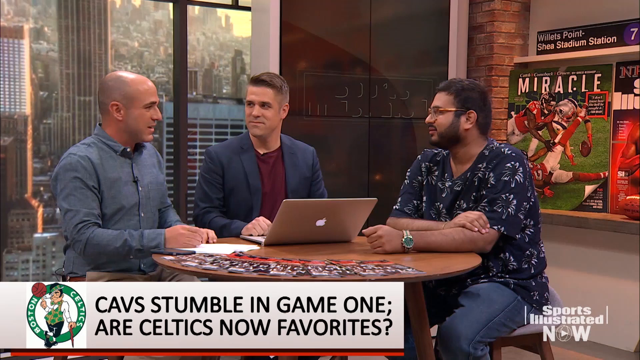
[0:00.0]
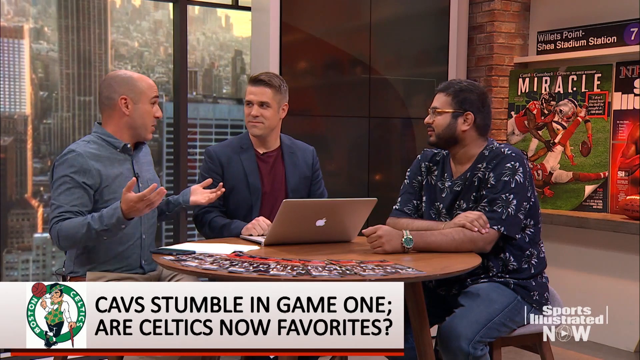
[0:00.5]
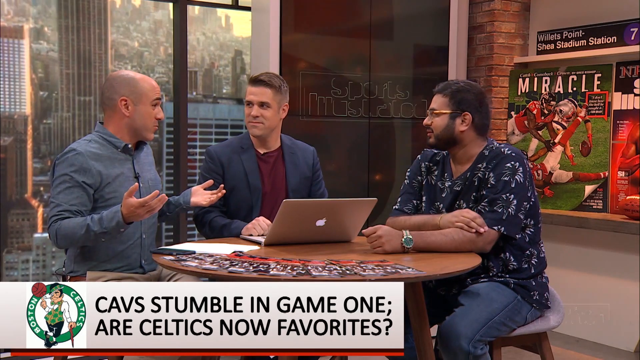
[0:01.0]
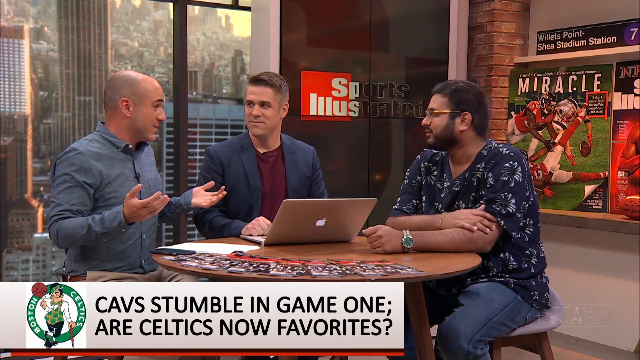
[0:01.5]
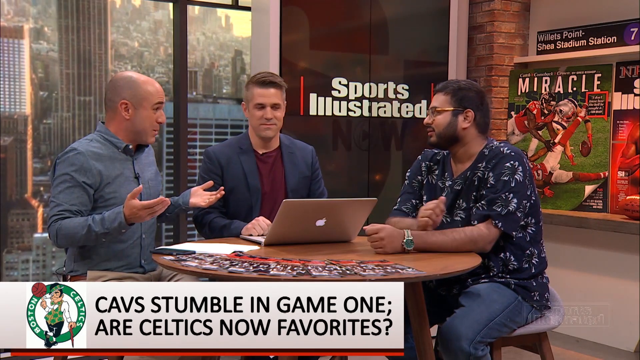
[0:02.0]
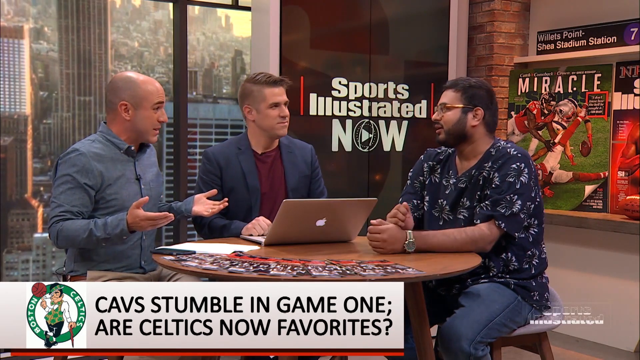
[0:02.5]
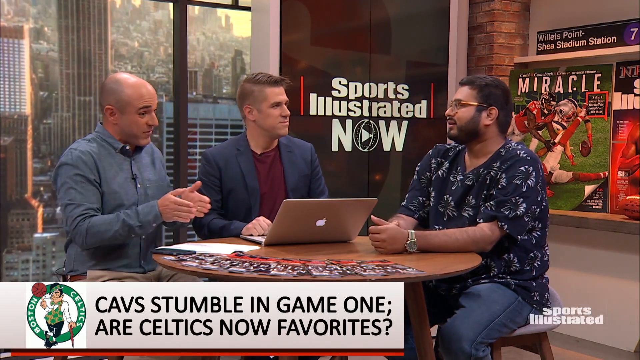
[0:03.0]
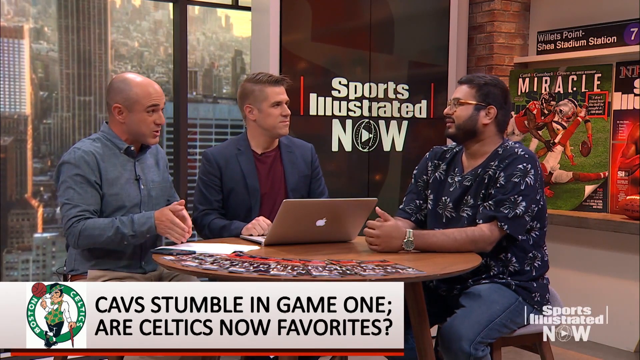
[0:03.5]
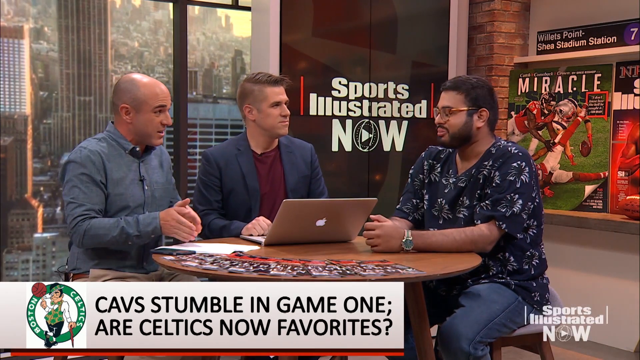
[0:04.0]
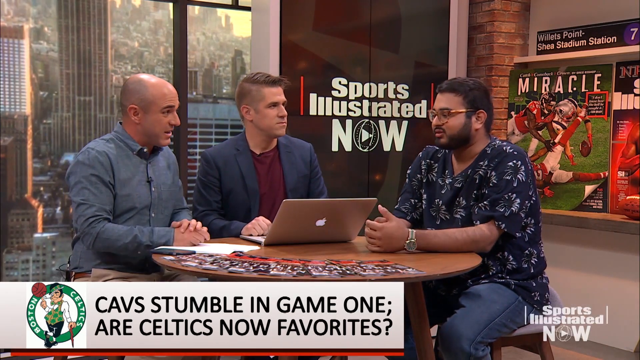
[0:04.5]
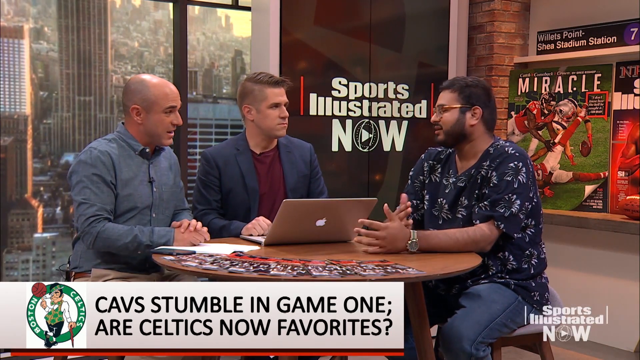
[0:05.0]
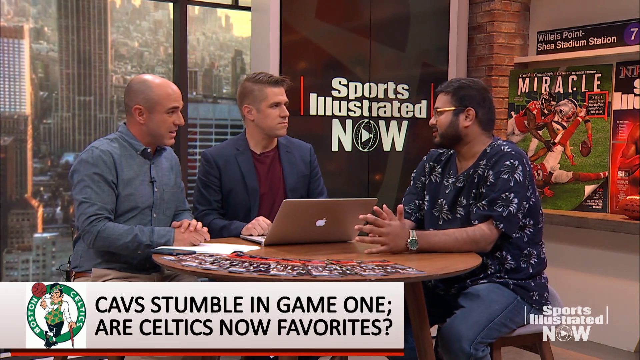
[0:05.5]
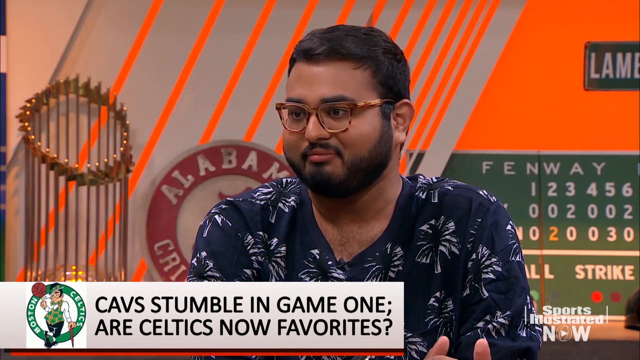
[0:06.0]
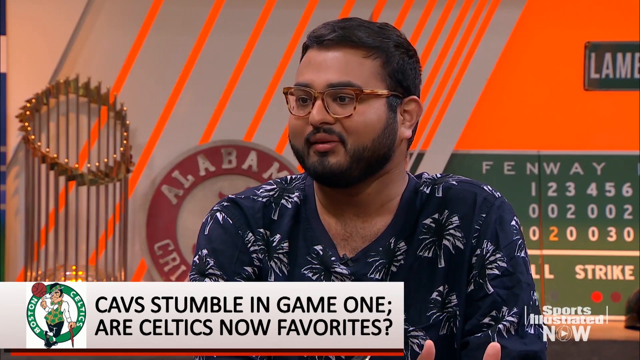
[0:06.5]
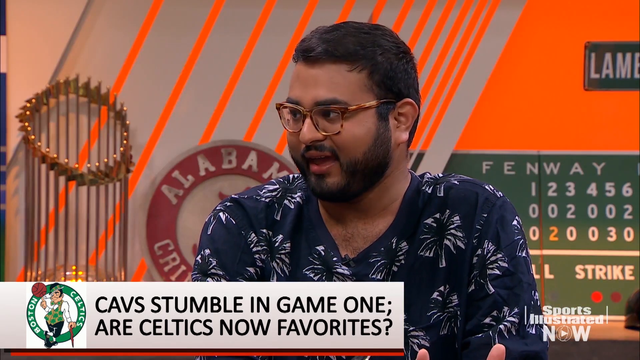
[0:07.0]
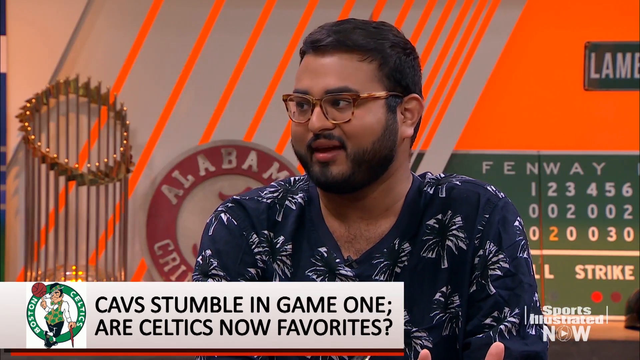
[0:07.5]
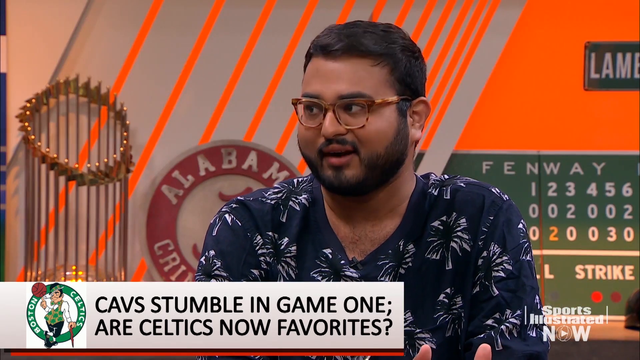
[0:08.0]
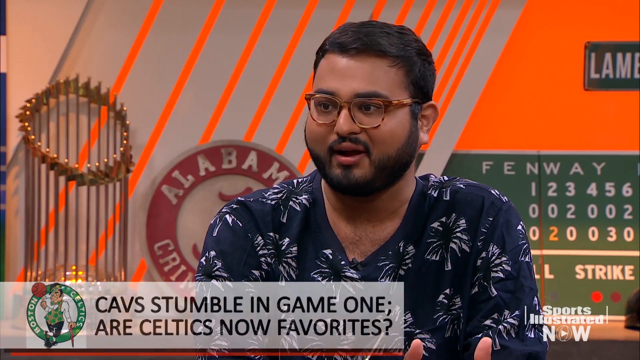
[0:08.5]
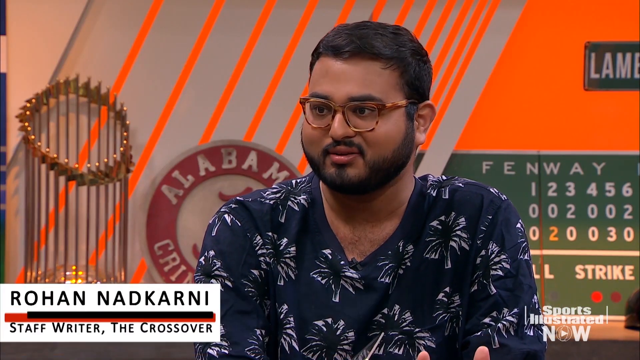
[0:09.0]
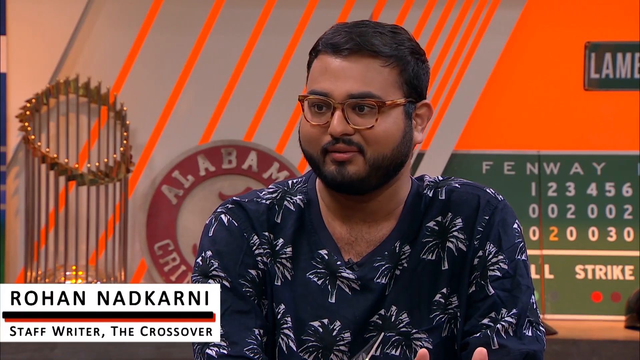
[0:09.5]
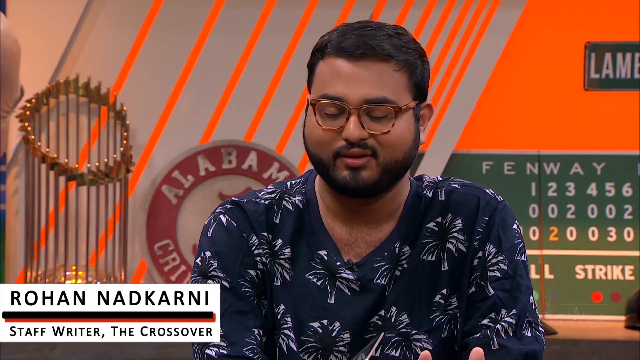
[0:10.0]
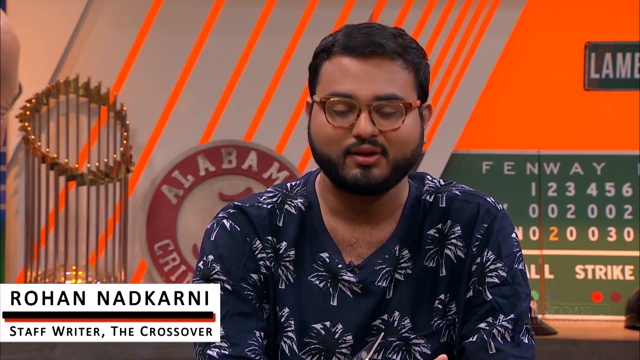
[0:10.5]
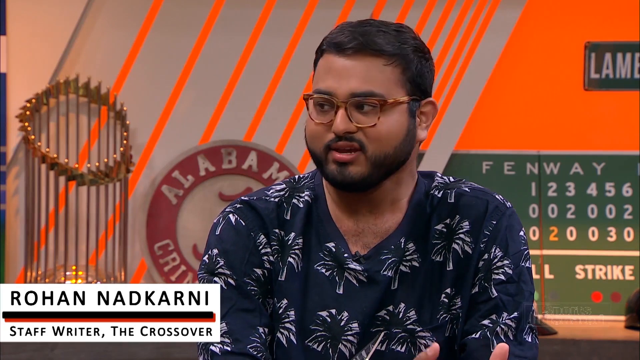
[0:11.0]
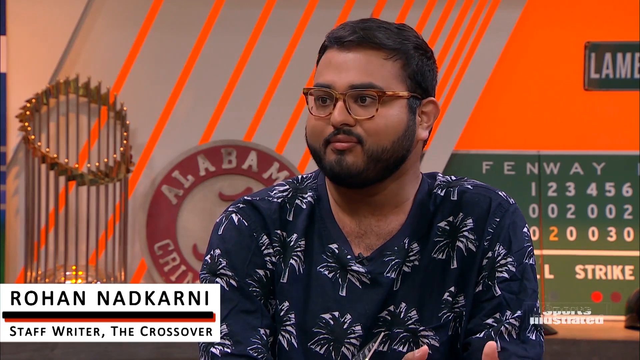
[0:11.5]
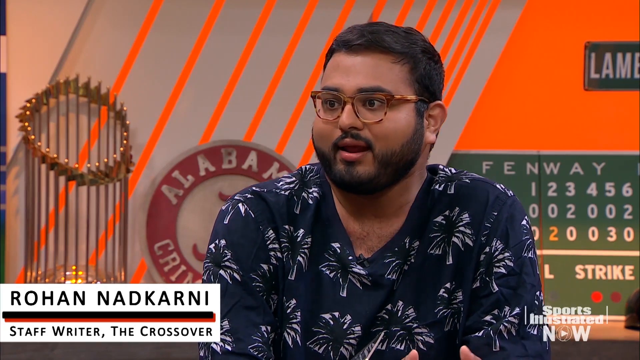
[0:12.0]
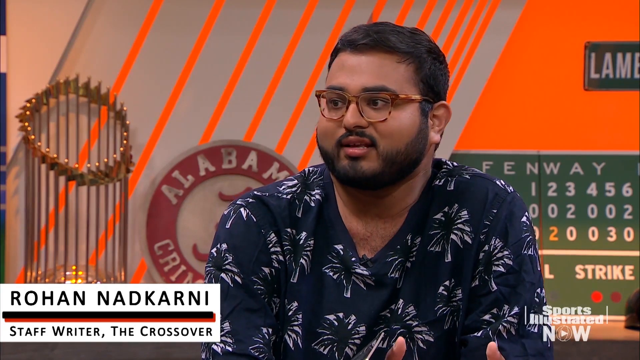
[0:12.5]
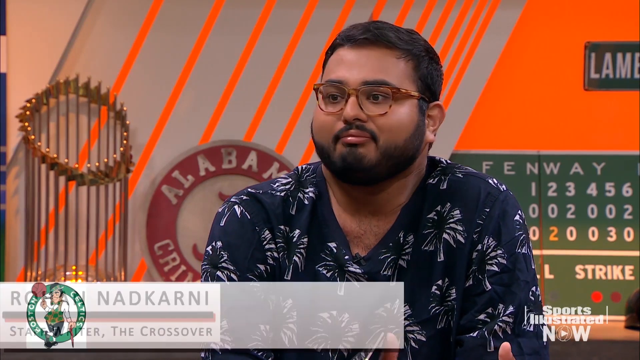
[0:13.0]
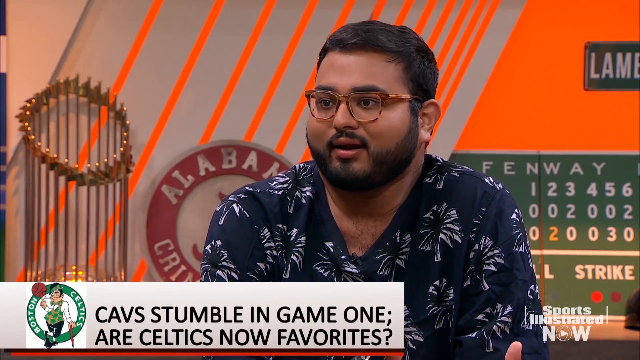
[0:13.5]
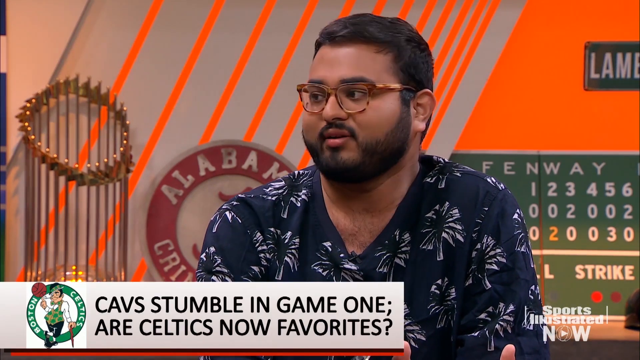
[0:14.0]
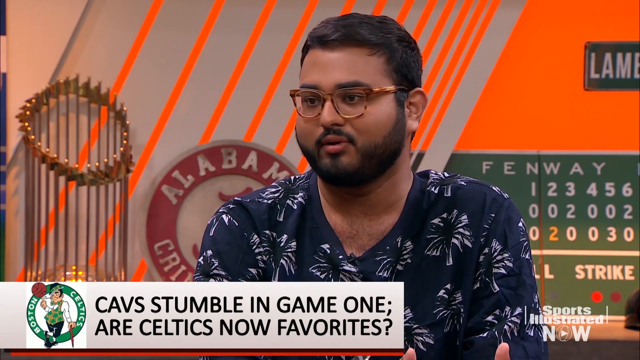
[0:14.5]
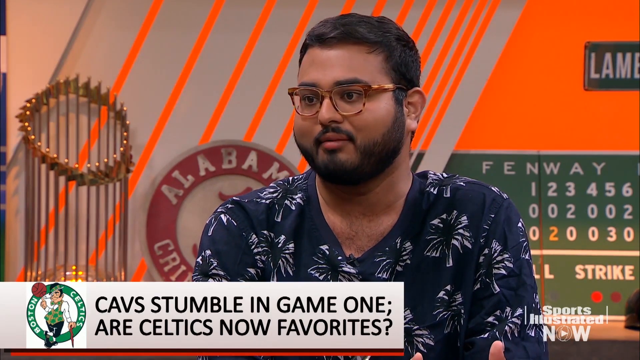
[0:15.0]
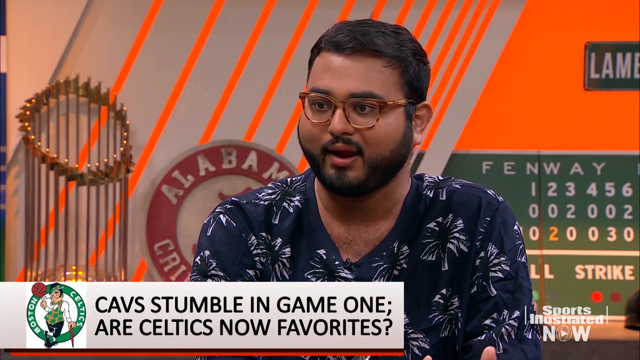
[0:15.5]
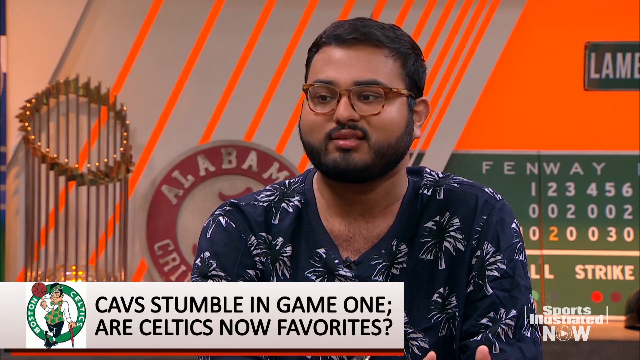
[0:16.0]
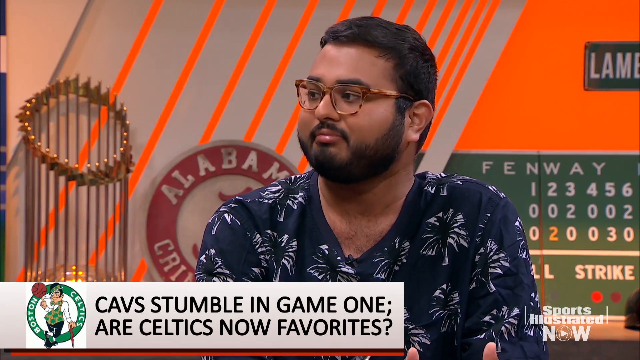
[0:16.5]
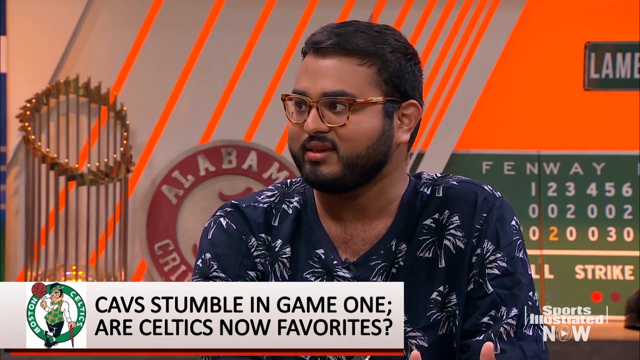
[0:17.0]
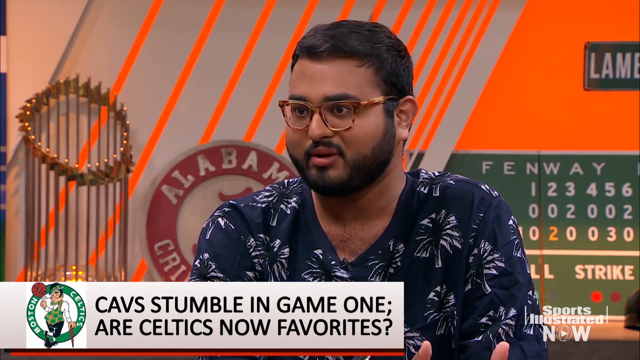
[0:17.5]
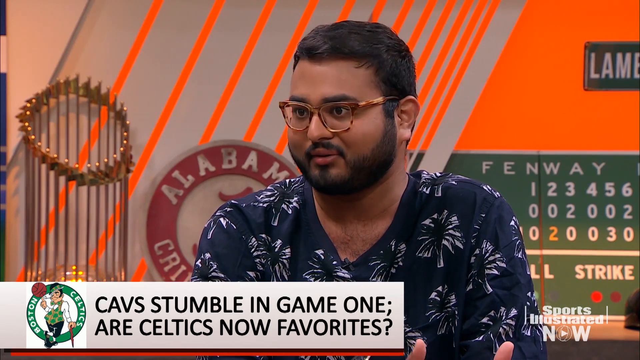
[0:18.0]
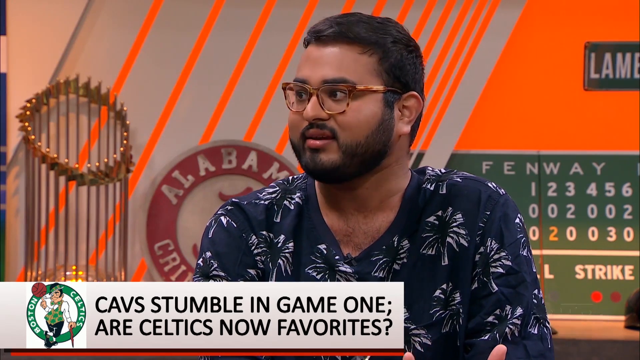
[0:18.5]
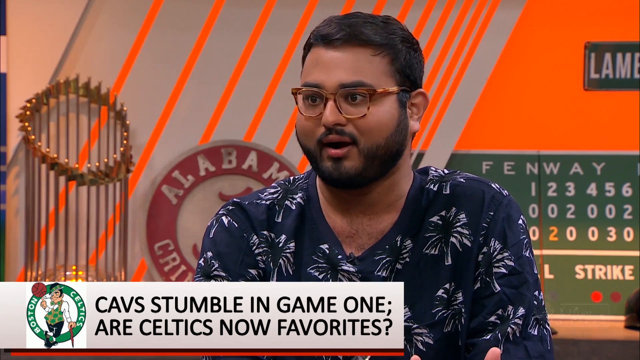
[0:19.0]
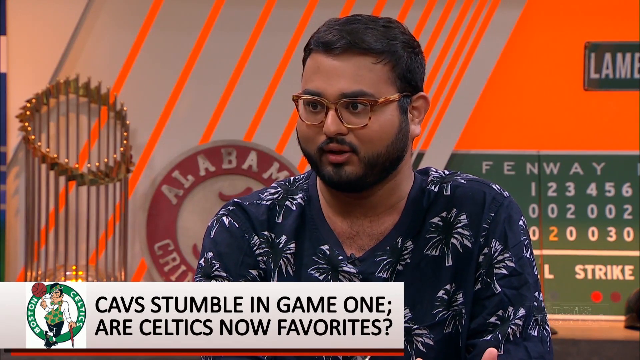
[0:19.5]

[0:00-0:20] Three men sit at a round table, with a television hanging on the wall behind them that reads "Sports Illustrated now." One of the men, who wears glasses, is talking and looks like he is trying to make some points. A white text box appears in the bottom left-hand corner of the screen reading "Cavs stumble in game one are Celtics now the favorites," suggesting the Cavaliers may have lost the first game and the Celtics are now seen as favorites to win the series. The room is completely full of sports memorabilia and looks like a set for a Sports Illustrated video. Posters hang on the wall, including one of a football player tackling another football player with the word "miracle" above them, along with some inspirational posters. Another round piece of sports memorabilia on the wall looks like it belongs to an Alabama college sports team.